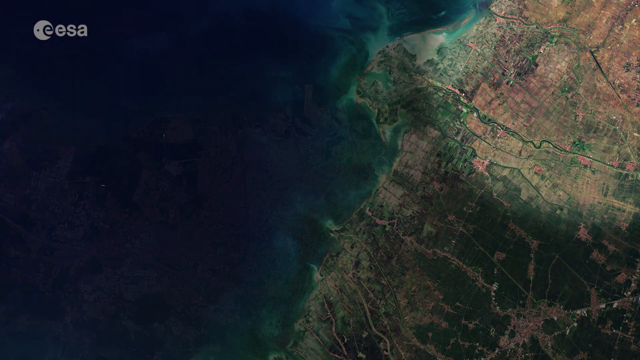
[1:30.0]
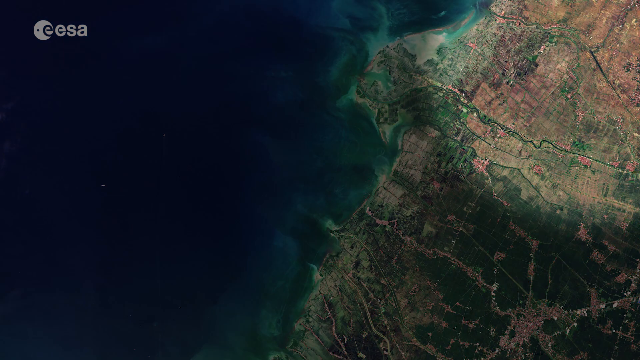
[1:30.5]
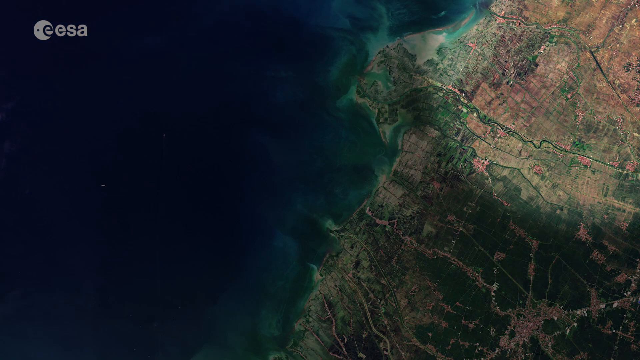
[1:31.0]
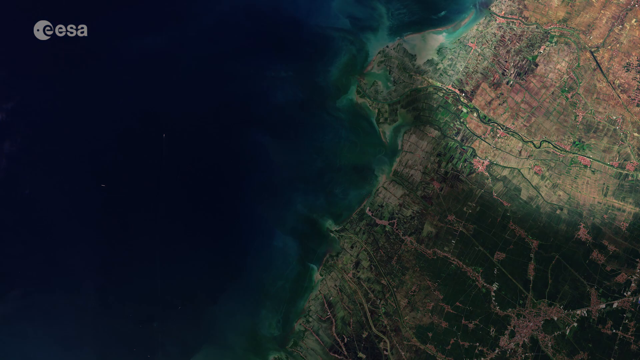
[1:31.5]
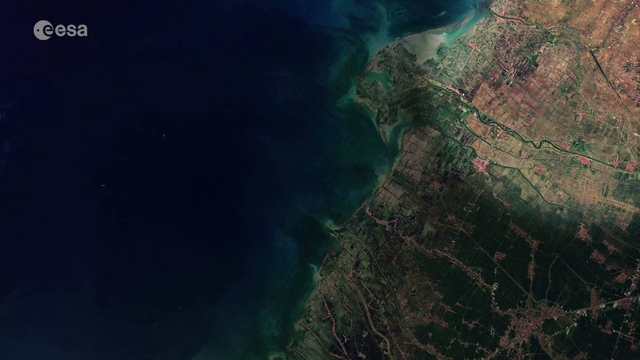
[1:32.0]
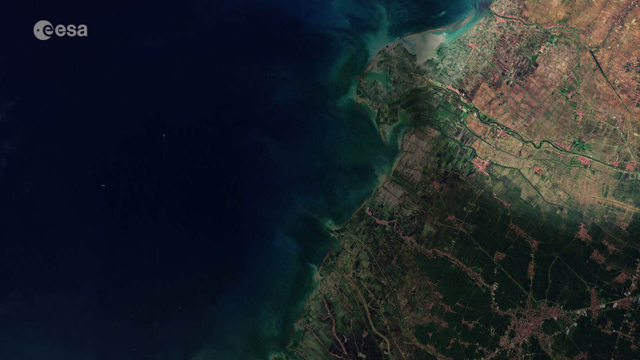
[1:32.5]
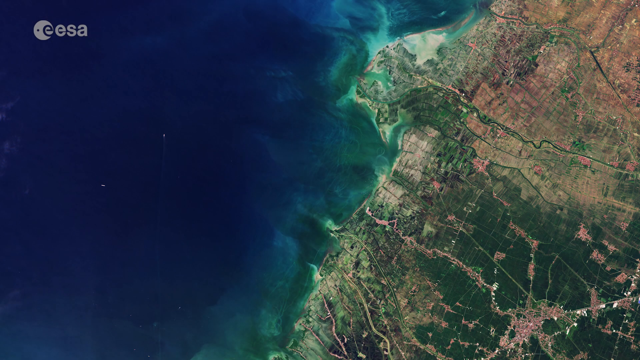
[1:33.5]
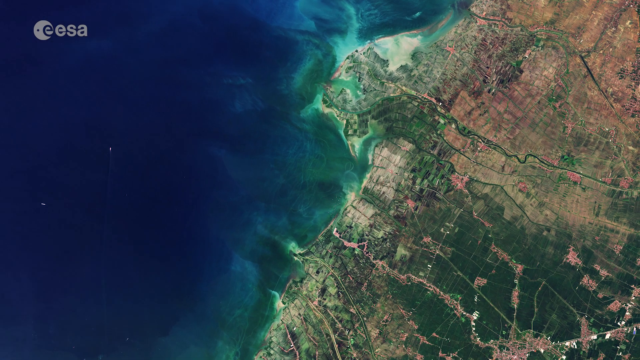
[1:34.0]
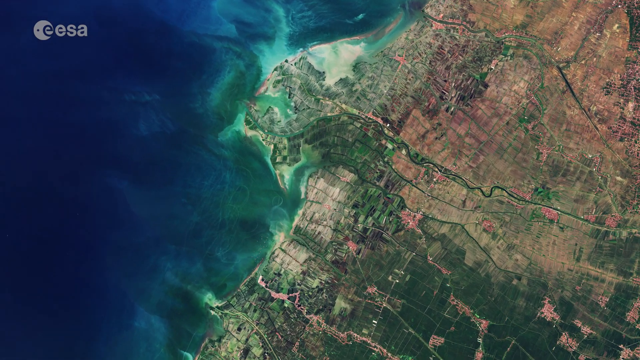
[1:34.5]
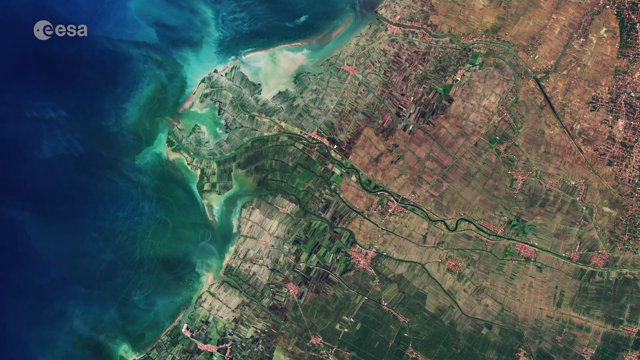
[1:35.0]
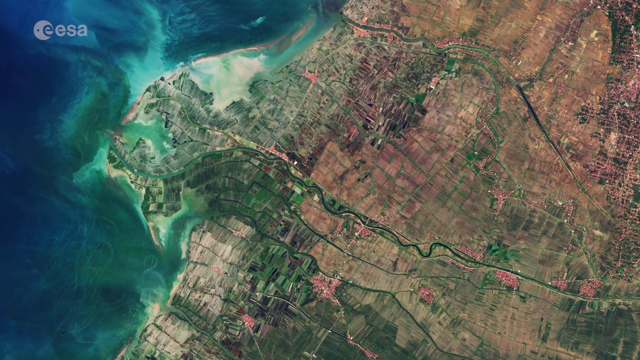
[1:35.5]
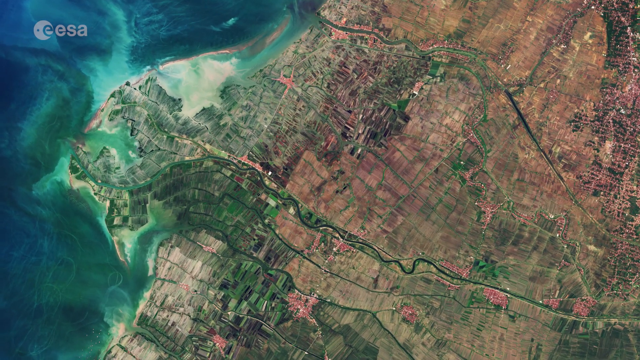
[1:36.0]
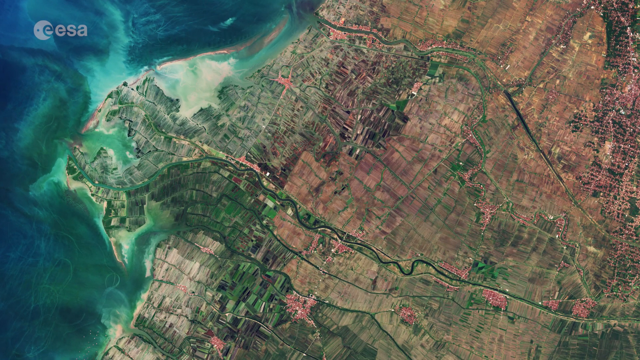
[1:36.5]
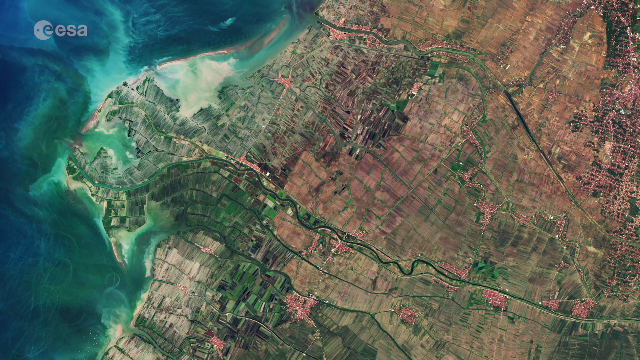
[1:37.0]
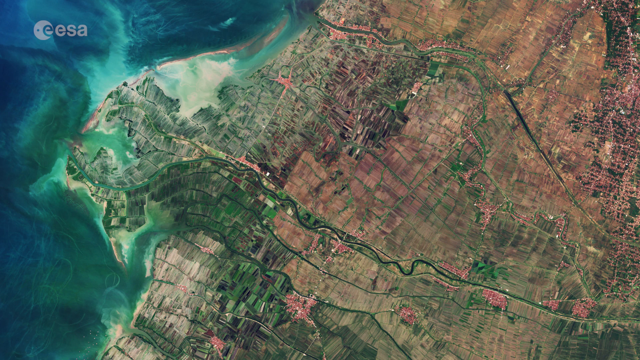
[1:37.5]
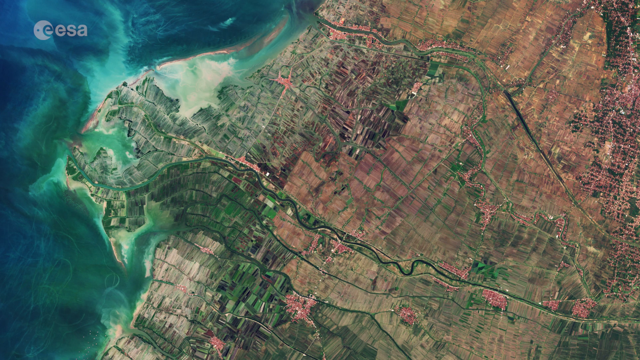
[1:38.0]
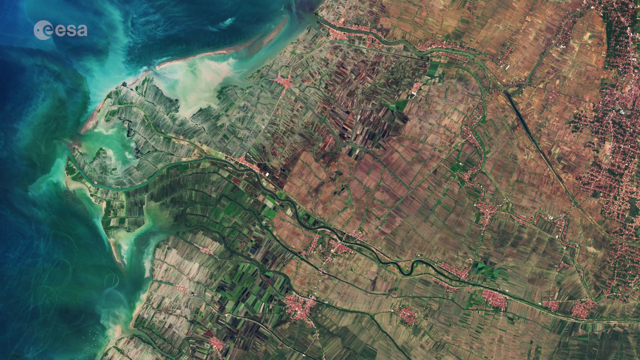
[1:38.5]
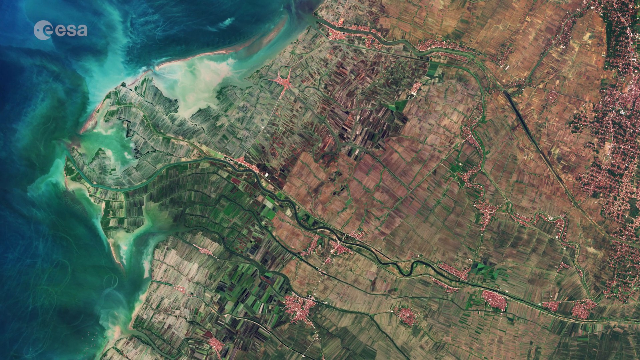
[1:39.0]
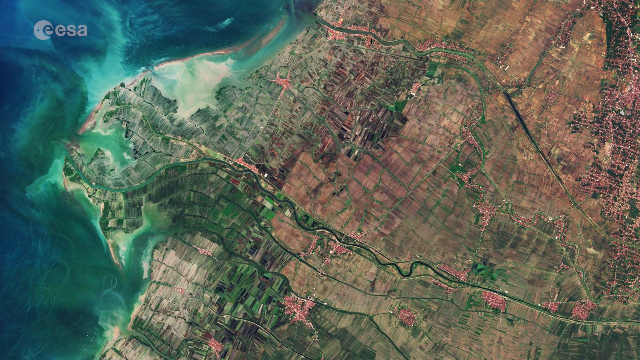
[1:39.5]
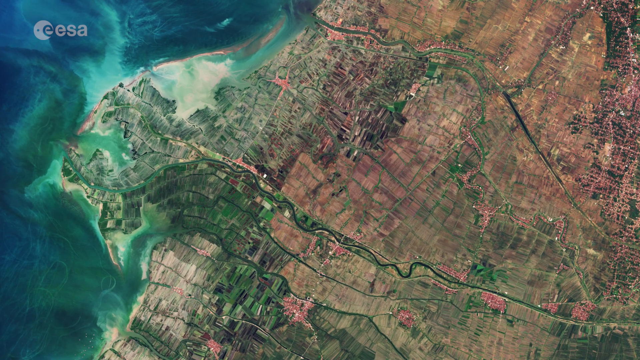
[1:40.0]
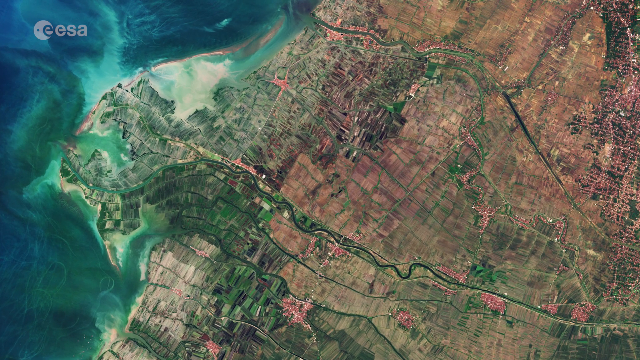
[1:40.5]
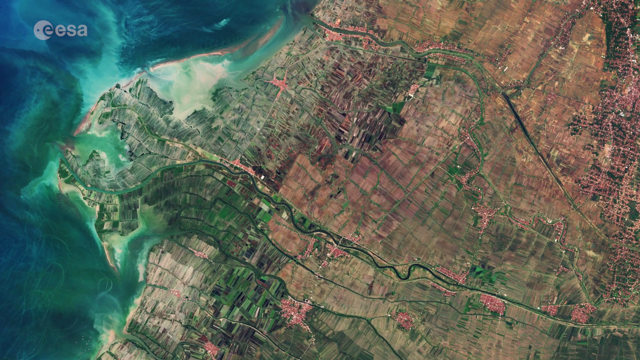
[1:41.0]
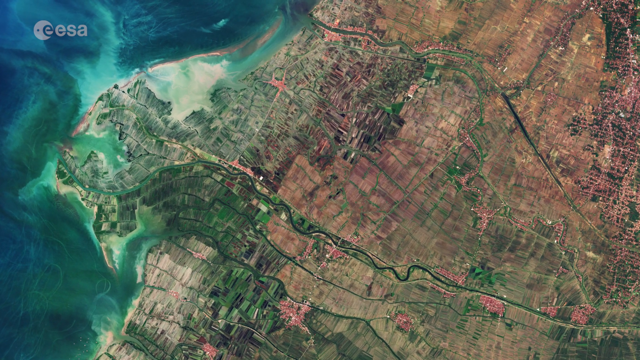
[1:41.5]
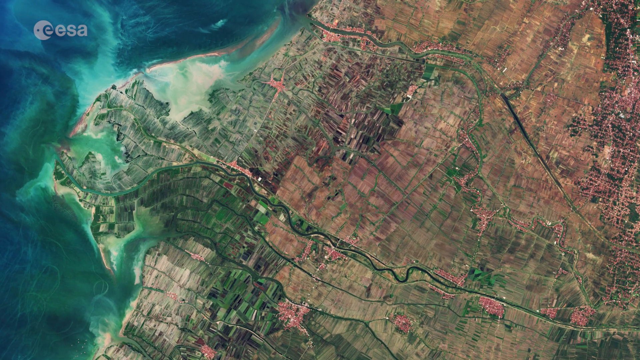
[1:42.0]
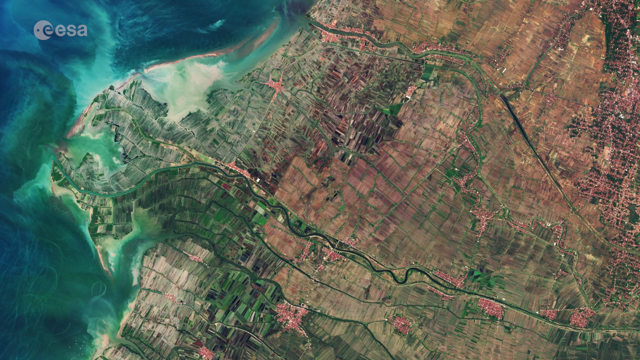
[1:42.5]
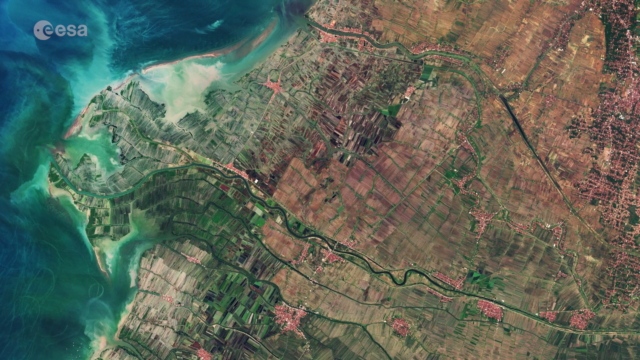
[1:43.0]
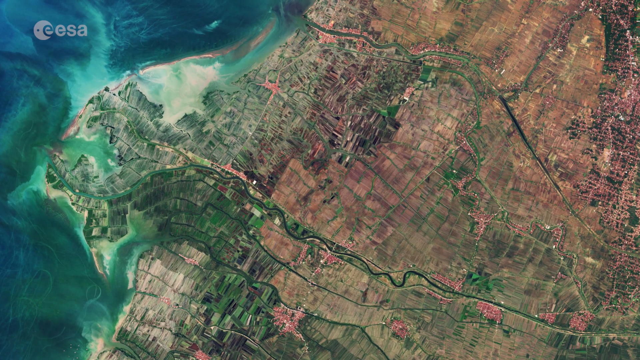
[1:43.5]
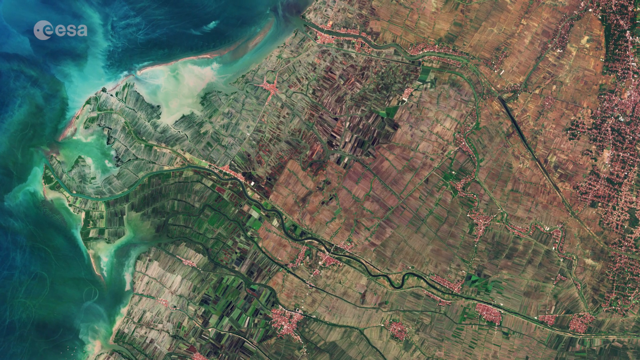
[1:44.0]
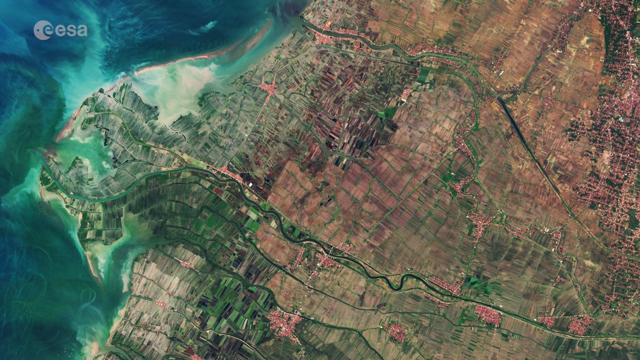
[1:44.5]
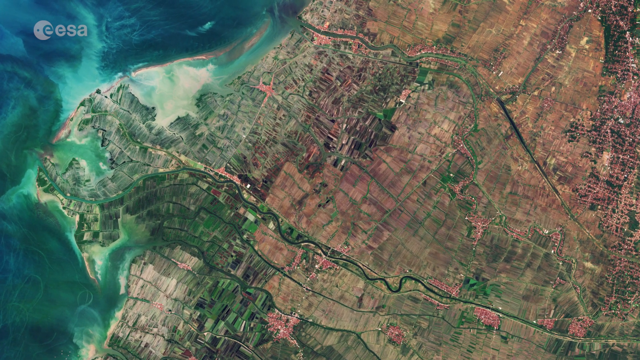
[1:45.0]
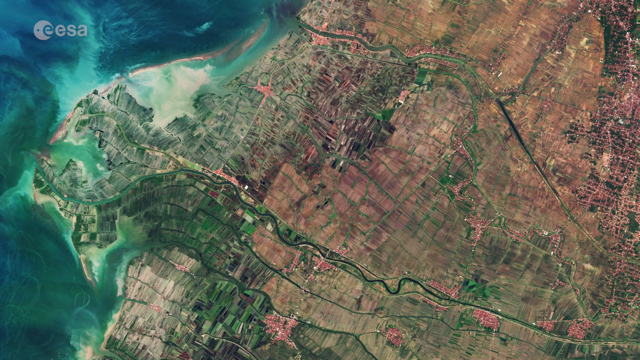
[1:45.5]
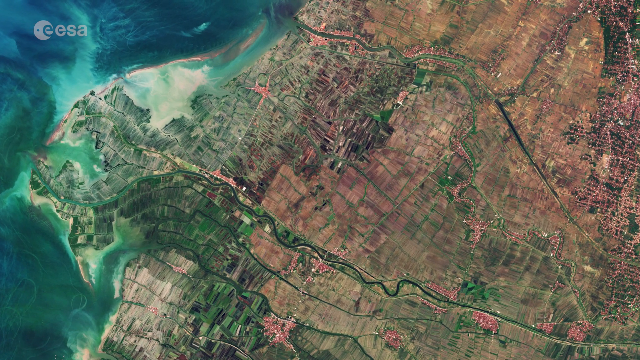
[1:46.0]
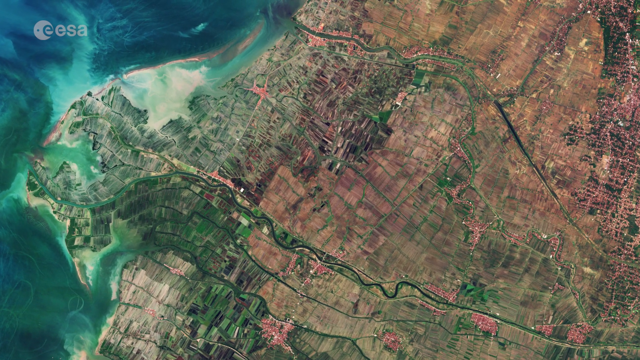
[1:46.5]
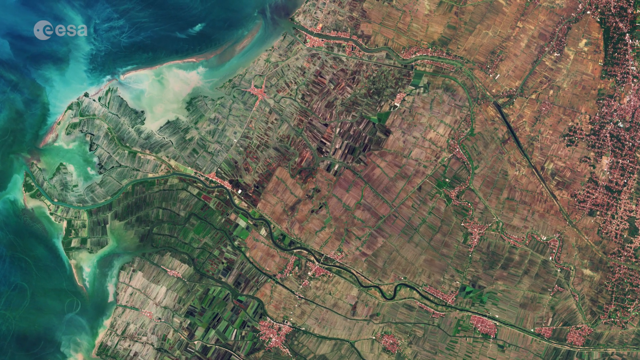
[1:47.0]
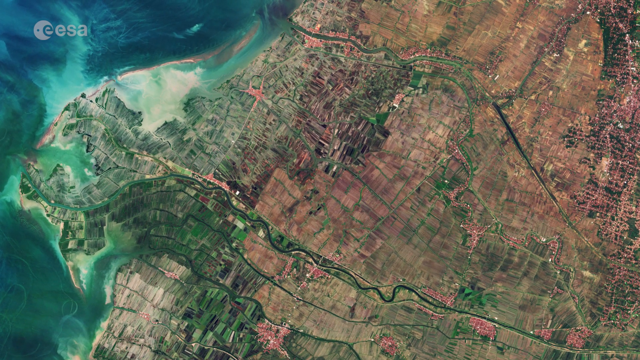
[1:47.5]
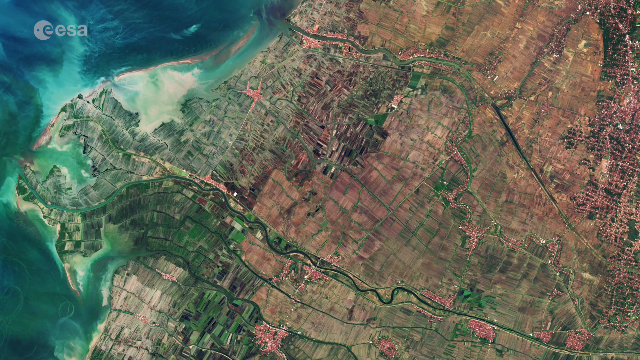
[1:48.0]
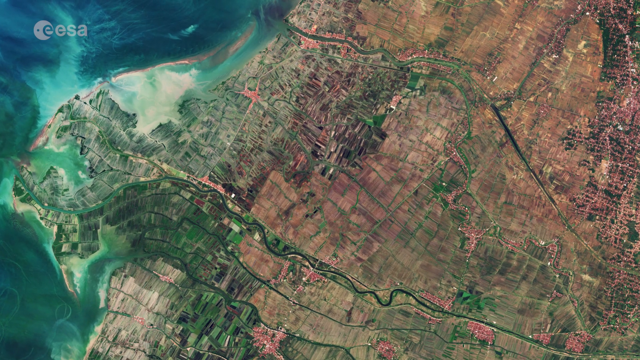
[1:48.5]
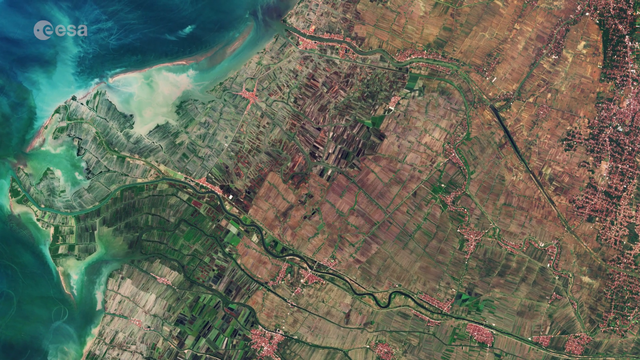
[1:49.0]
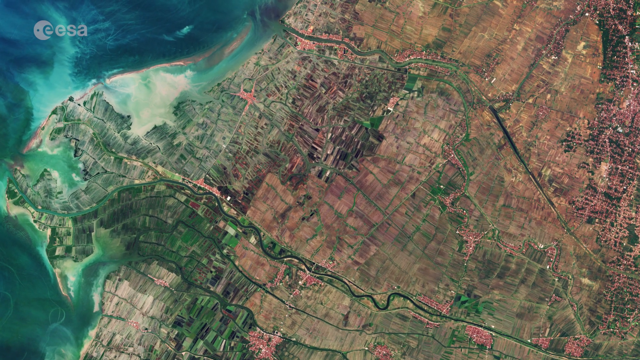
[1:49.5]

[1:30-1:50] "EESA" appears in the top left corner of the screen as the narrow bit of land adjacent to the water is highlighted. There are rows of green, brown, pink, light green and gray, with heavy lines and lighter lines; the shapes are sort of in blocks, but none of the squares and blocks connect. A zoomed-in area gives a close-up of dark green, light green, gray, pink, brown and light brown shapes, including some black rectangles and squares, stacked upon each other. Dark green lines are drawn leading out toward the sea, and another line at the top of the screen also has a curve and leads out toward the sea; these are the darker lines. Thinner lines break everything up into uneven squares and rectangles.